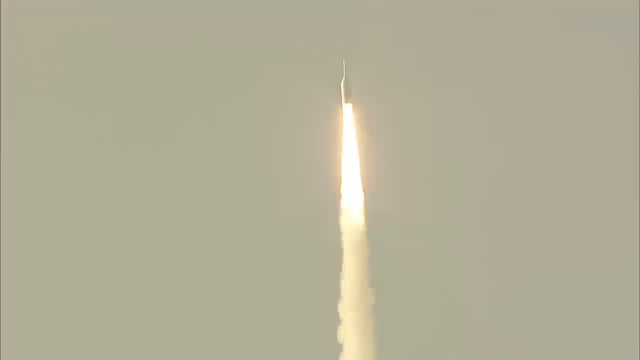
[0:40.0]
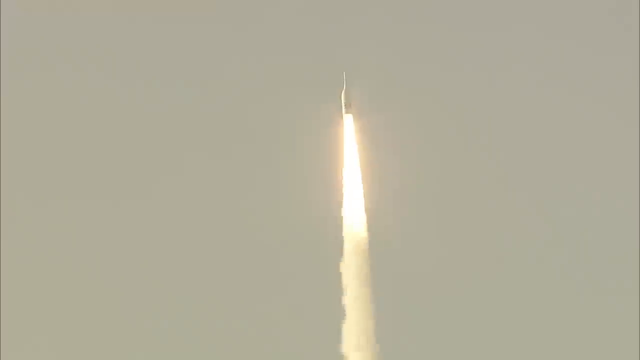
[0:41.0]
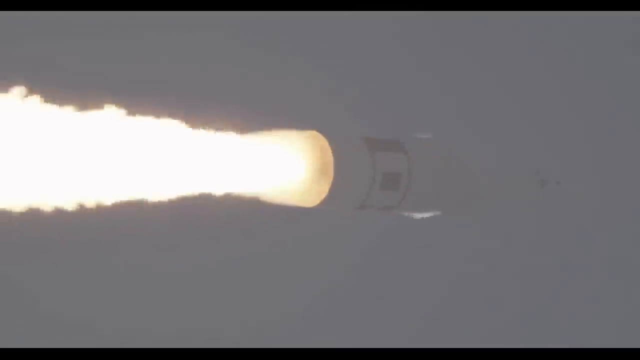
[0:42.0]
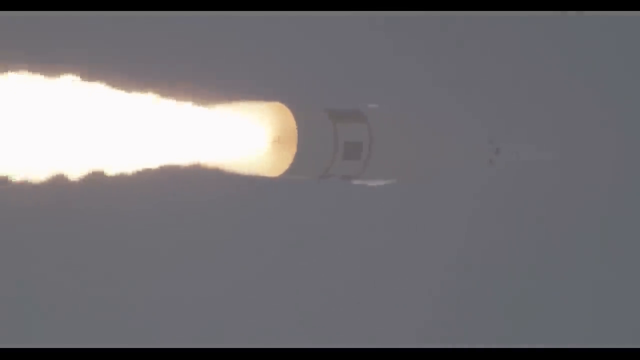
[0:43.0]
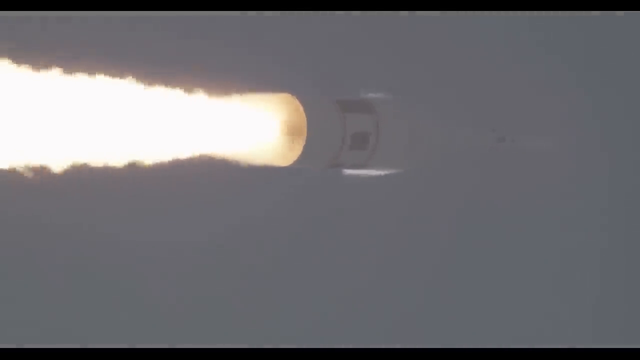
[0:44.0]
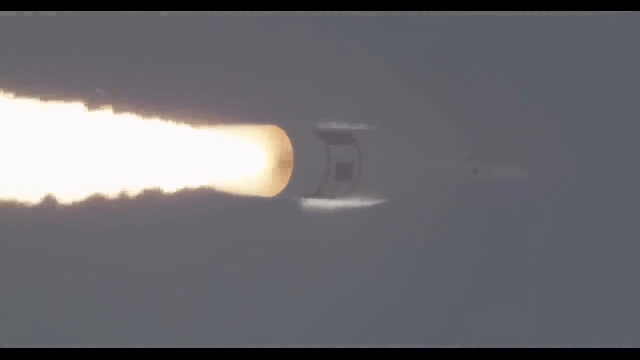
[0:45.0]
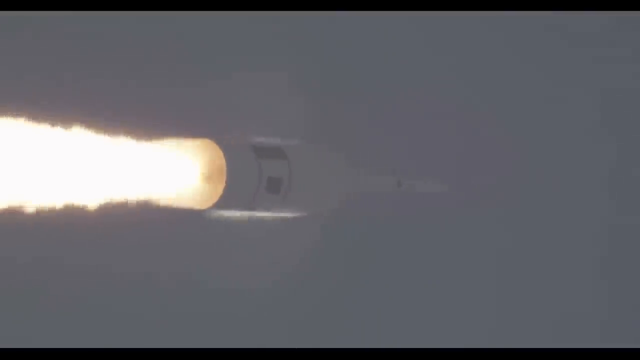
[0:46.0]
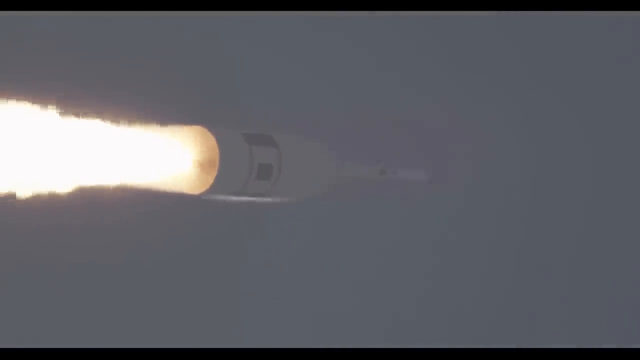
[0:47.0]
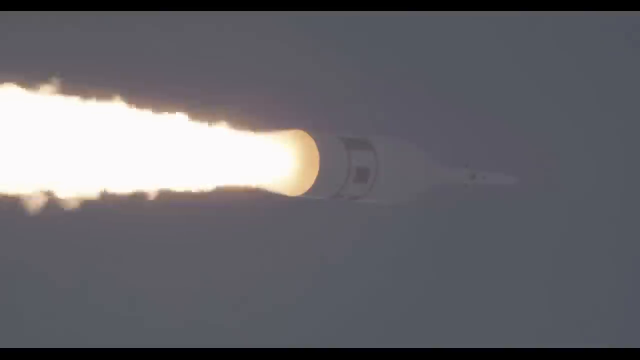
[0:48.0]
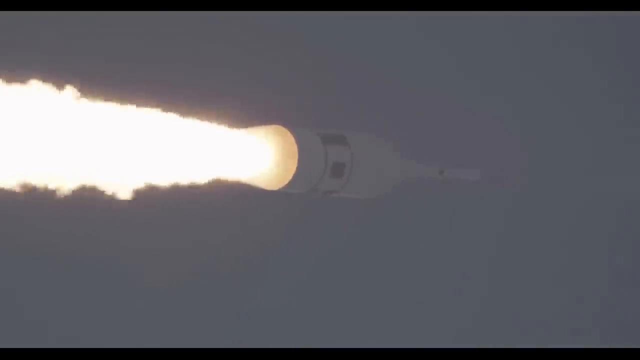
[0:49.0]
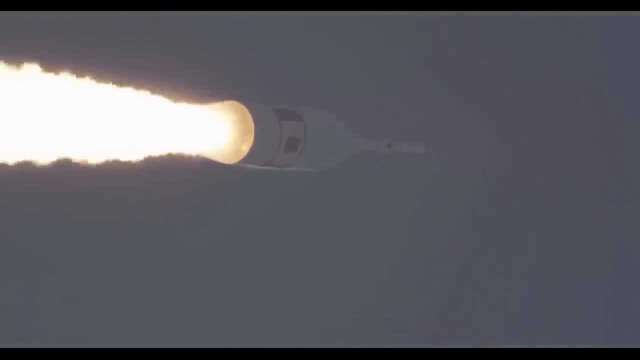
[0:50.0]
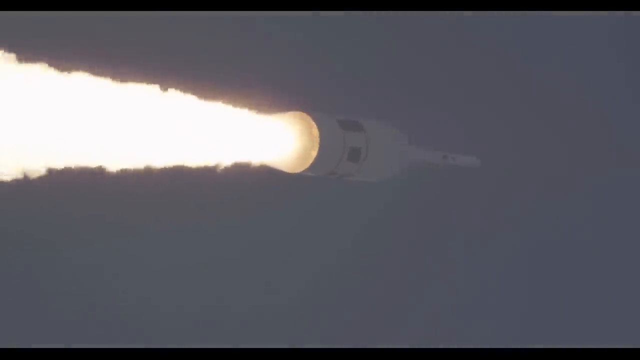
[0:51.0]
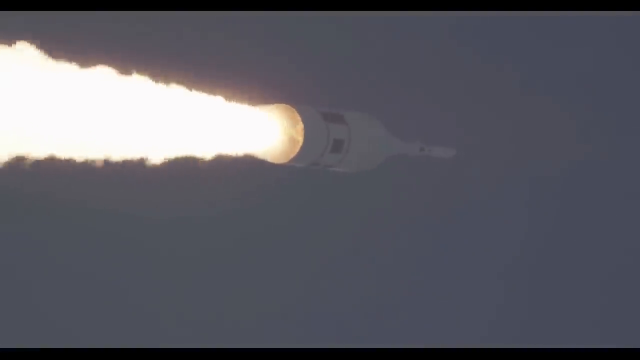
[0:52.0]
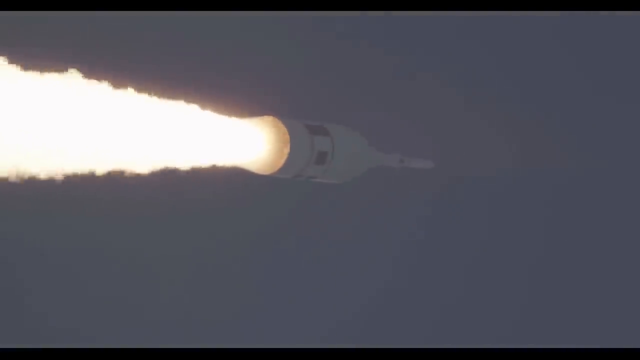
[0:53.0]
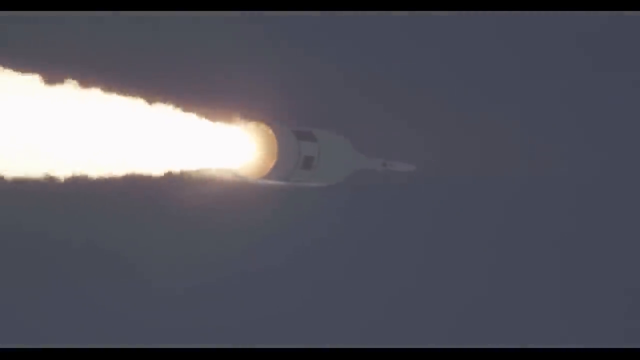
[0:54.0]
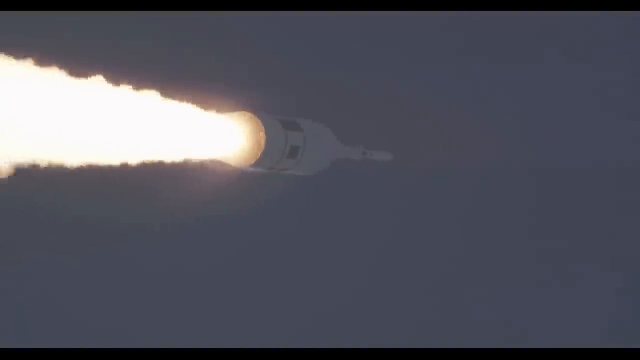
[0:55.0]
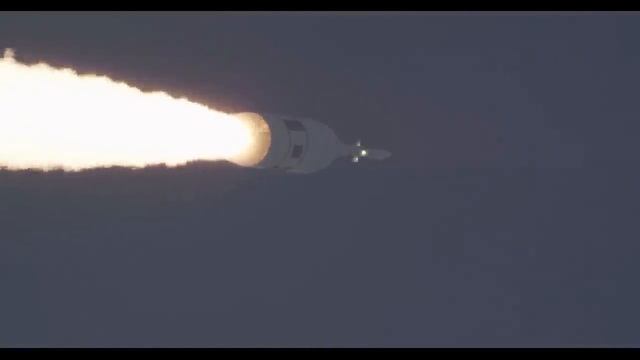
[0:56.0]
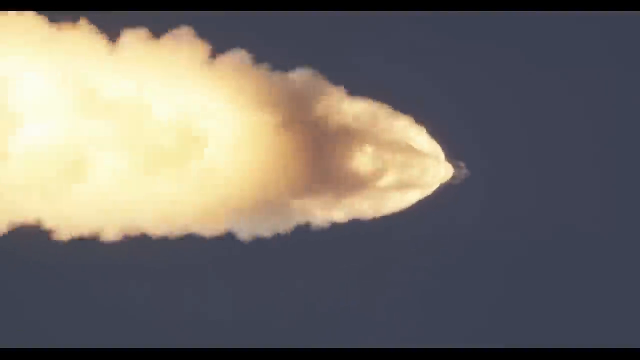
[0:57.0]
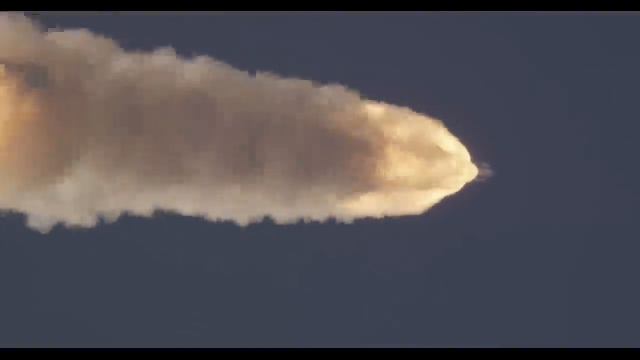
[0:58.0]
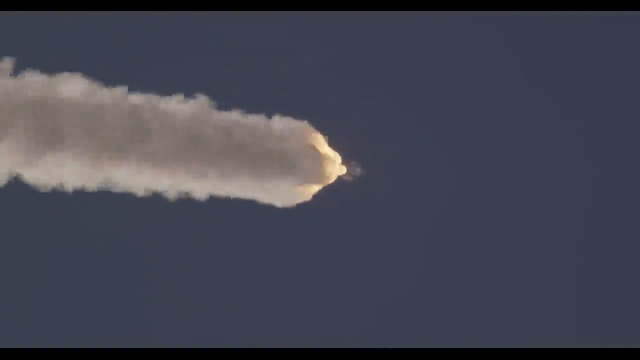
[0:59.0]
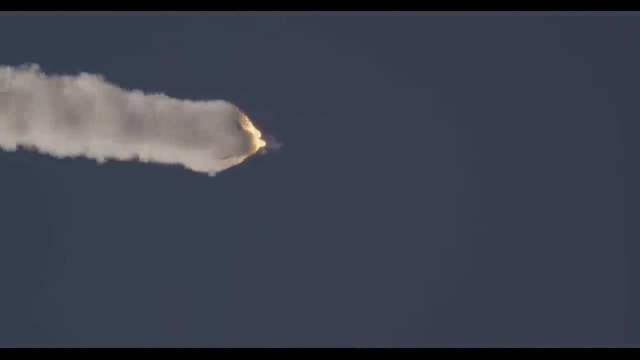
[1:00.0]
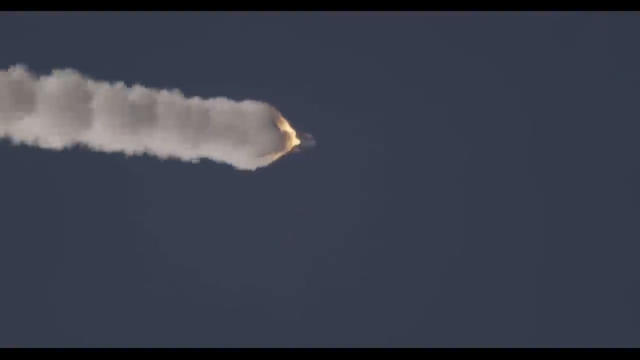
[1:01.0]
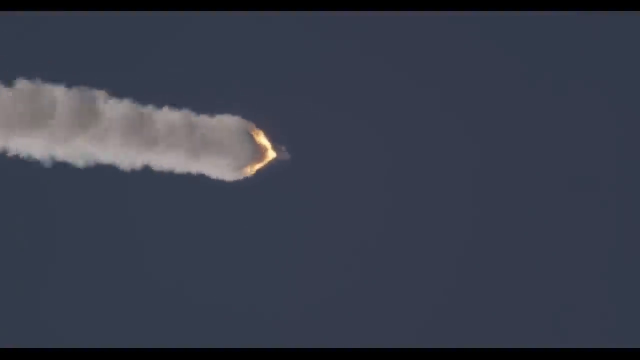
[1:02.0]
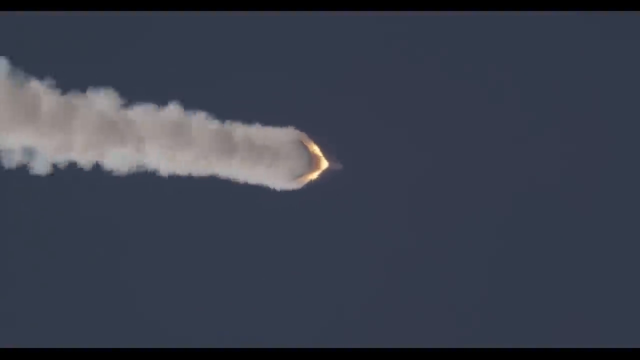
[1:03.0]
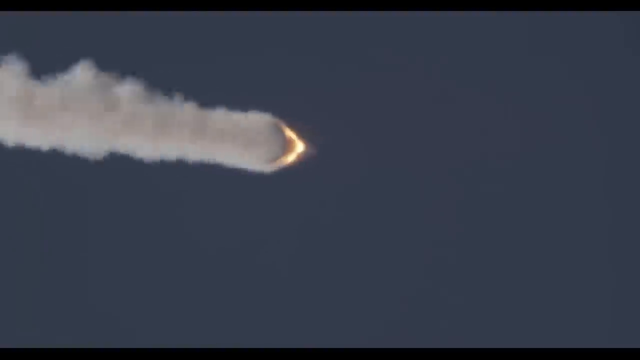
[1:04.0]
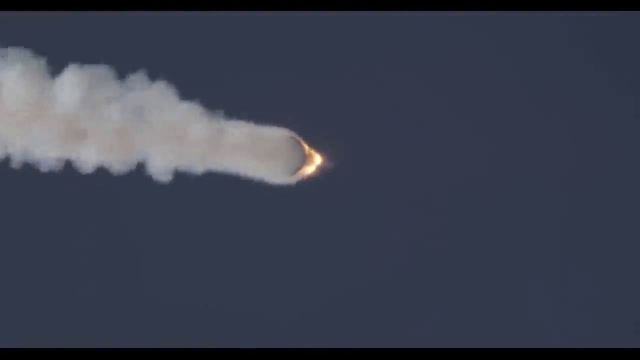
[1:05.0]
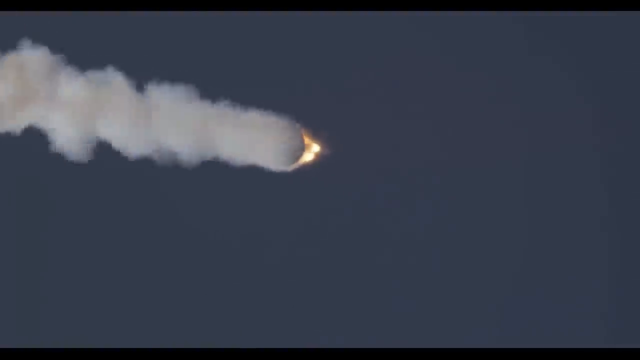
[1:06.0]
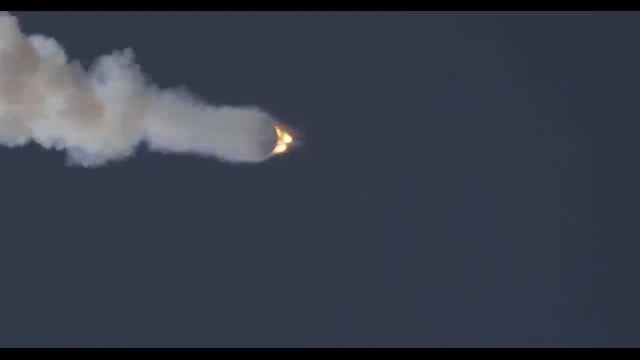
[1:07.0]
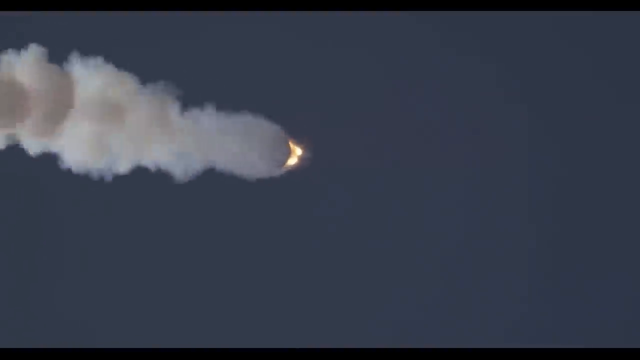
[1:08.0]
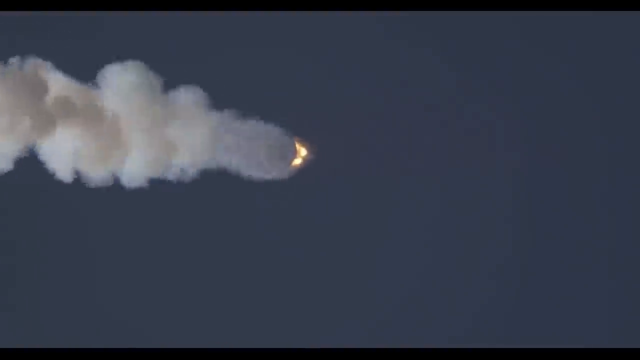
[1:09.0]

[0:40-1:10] The rocket flies through the atmosphere against a kind of grayish sky. It is white and cylinder-shaped with a thin cylinder on top, with a column of flames underneath, a large white light surrounded by orange and yellow, and a column of smoke below that ripples as the rocket shoots up. Another shot shows the rocket at an angle, so the smoke and flames appear to jut to the left side of the screen while the rocket appears to fly to the right, the white flames rippling out of the bottom. For a moment some white lights appear around the edge of the rocket. As it shoots upward with flames rippling and bursting on the left side, the whole rocket catches on fire, blows up and bursts into flame, with gushing smoke everywhere that consumes the rocket. A flame crawls upward, slowly reaching the tip of the rocket, and everything burns away until only a small section is left, looking like a kind of round chunk from the top.